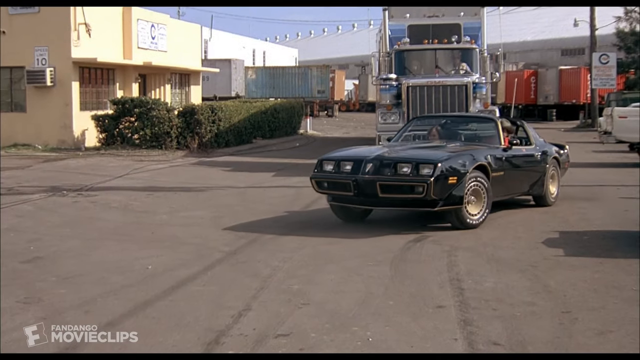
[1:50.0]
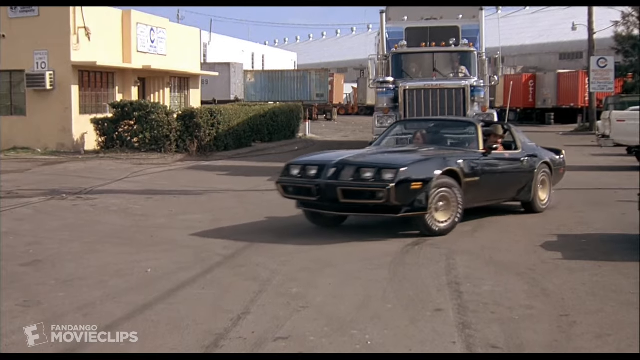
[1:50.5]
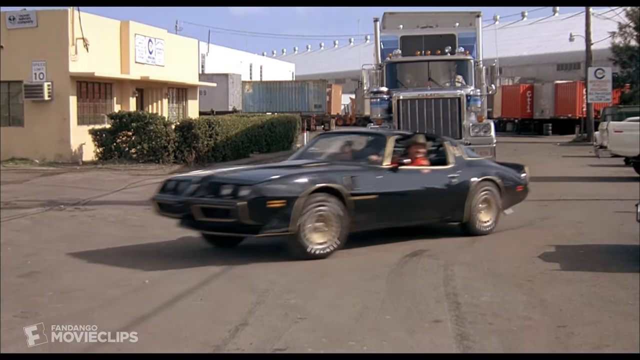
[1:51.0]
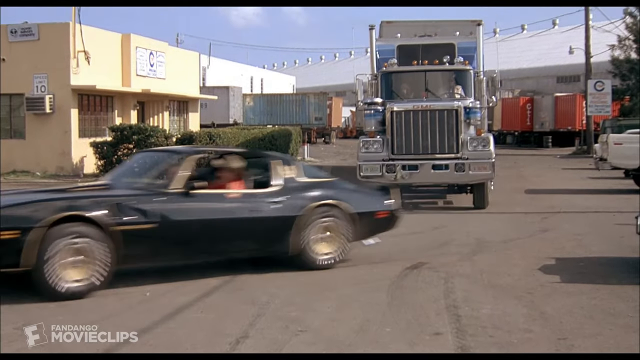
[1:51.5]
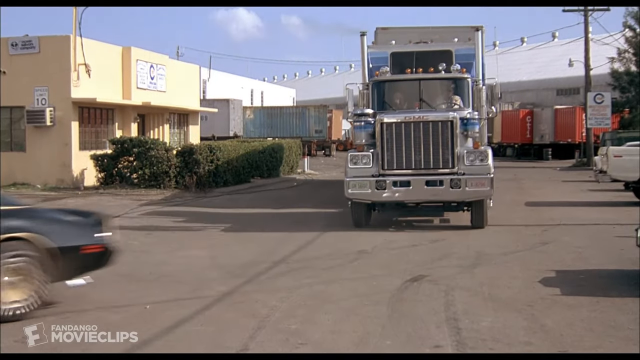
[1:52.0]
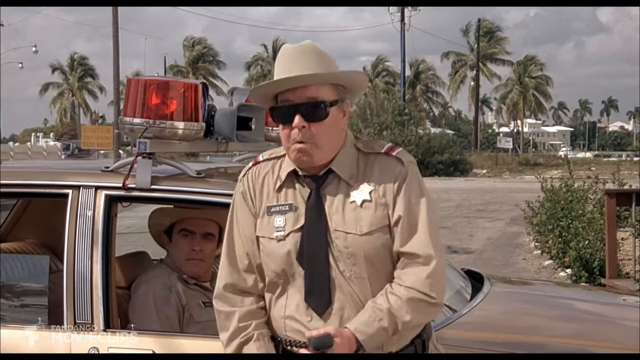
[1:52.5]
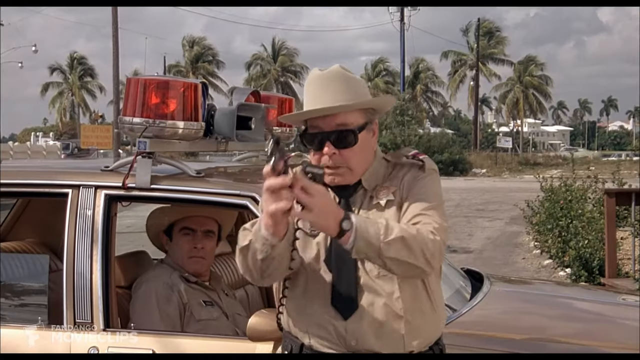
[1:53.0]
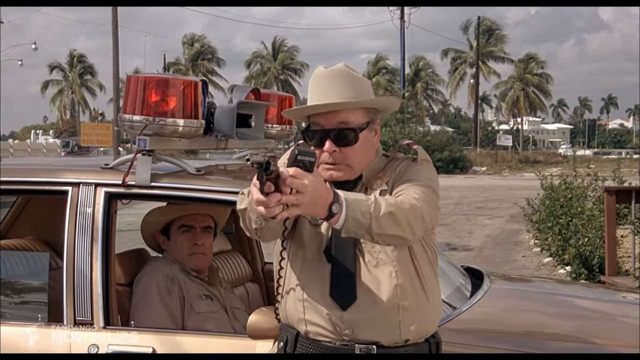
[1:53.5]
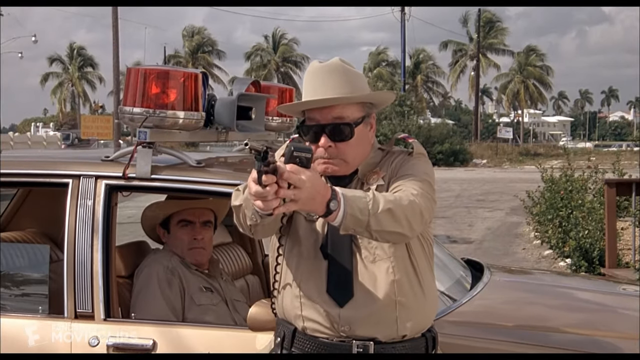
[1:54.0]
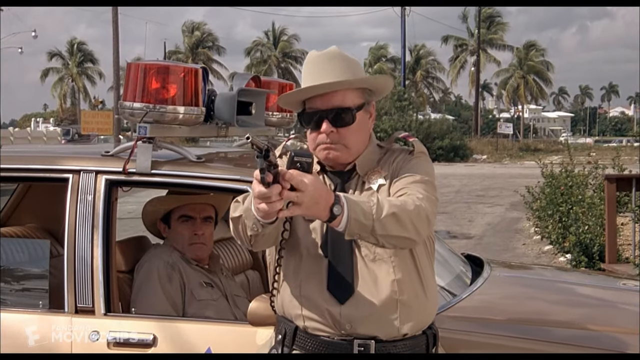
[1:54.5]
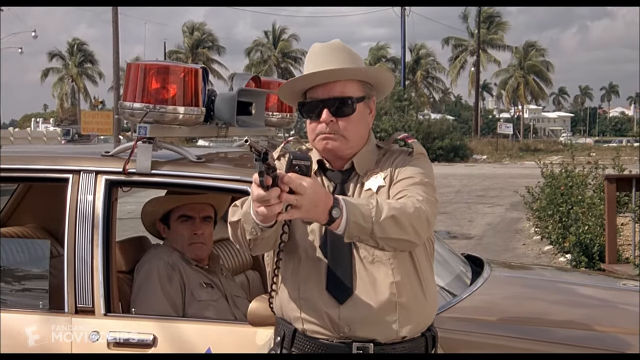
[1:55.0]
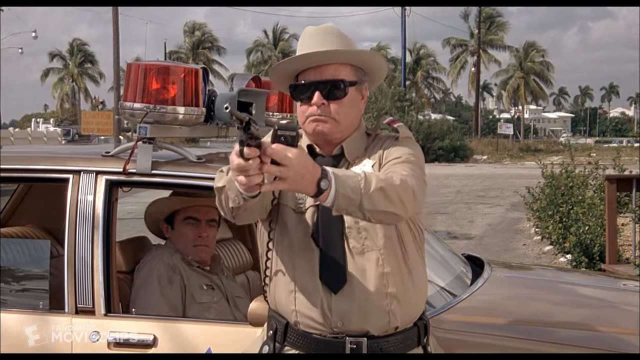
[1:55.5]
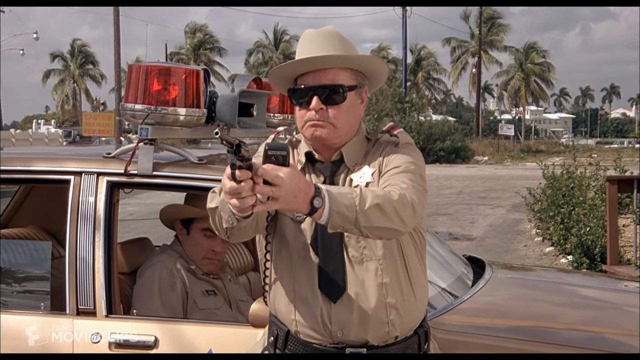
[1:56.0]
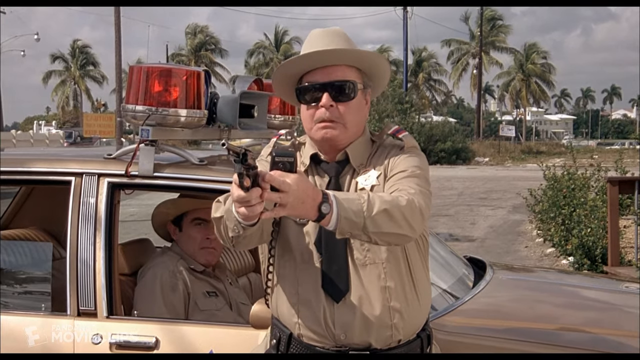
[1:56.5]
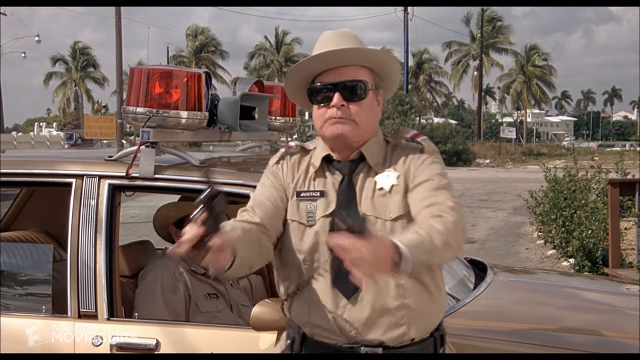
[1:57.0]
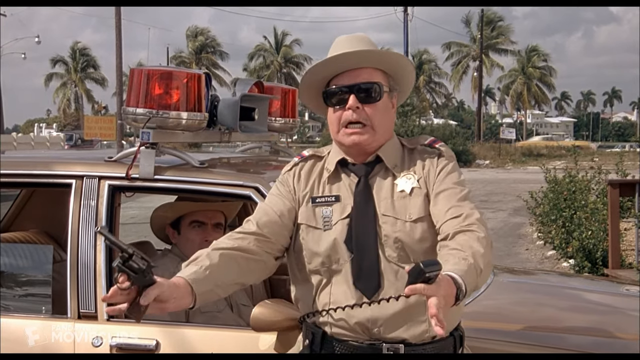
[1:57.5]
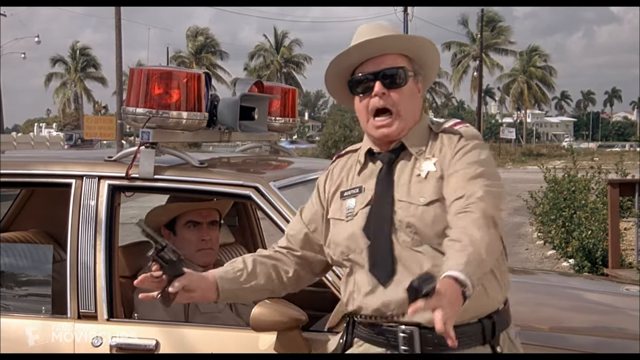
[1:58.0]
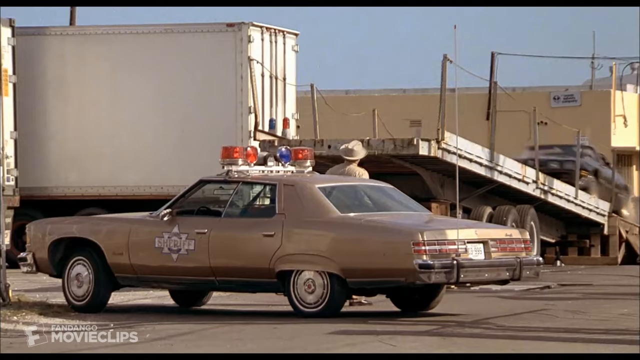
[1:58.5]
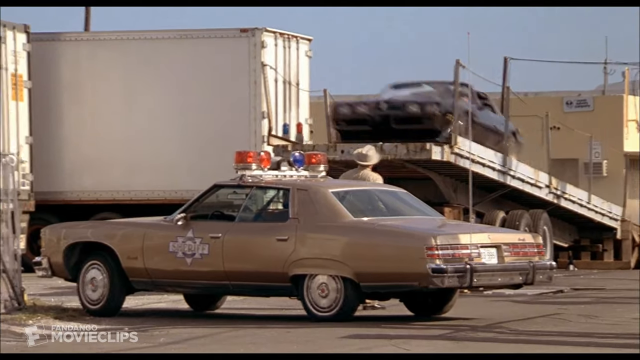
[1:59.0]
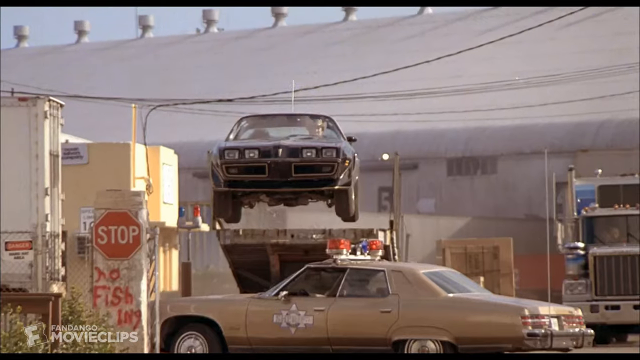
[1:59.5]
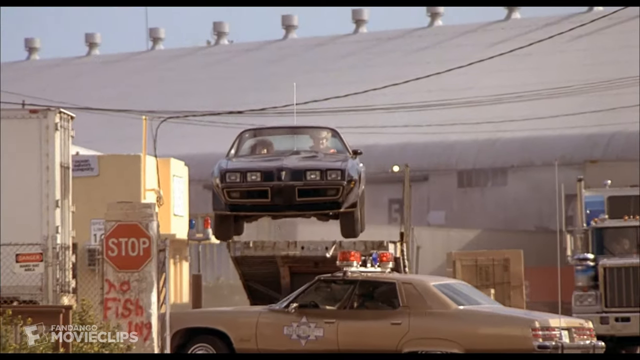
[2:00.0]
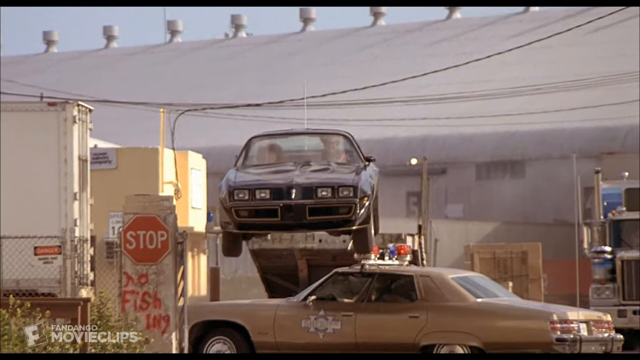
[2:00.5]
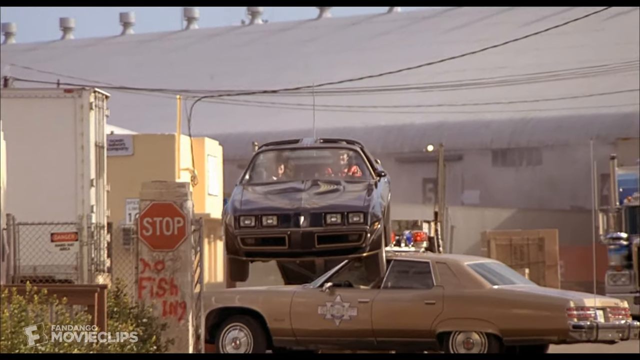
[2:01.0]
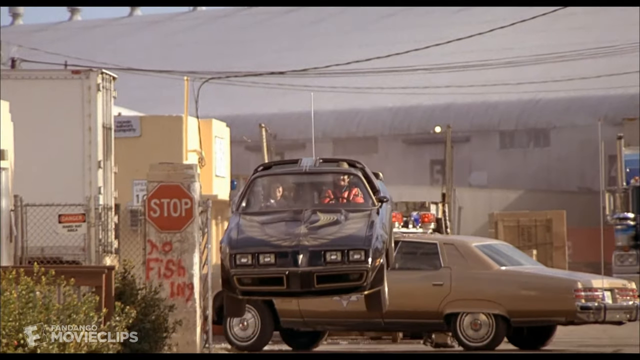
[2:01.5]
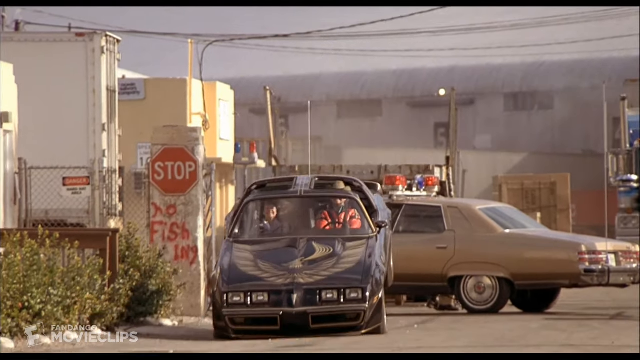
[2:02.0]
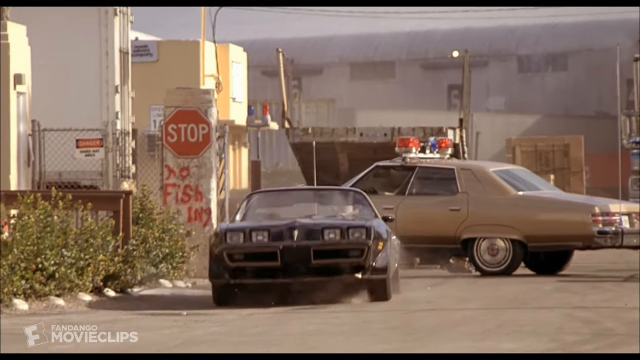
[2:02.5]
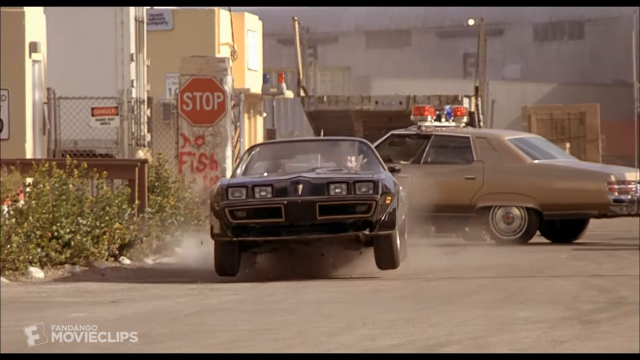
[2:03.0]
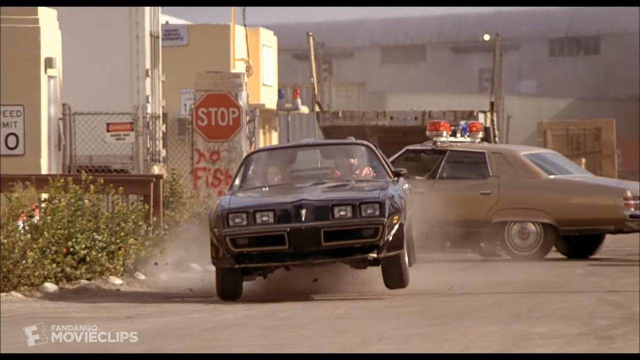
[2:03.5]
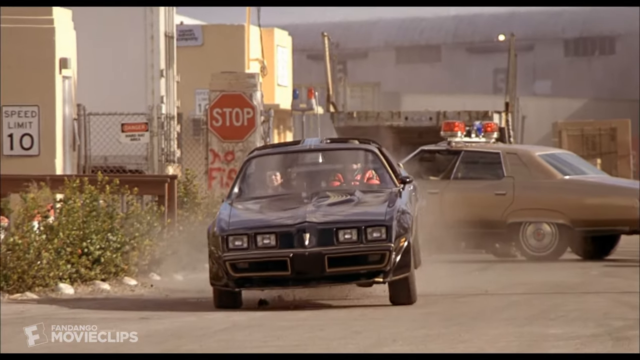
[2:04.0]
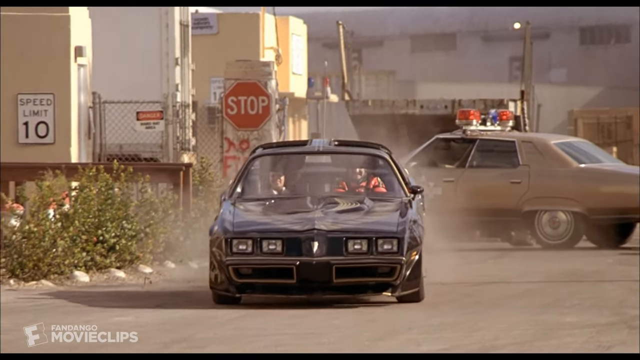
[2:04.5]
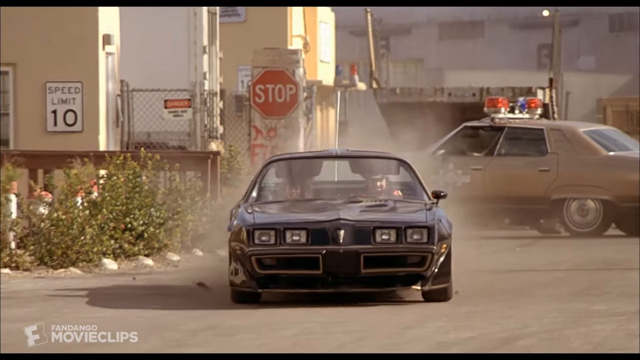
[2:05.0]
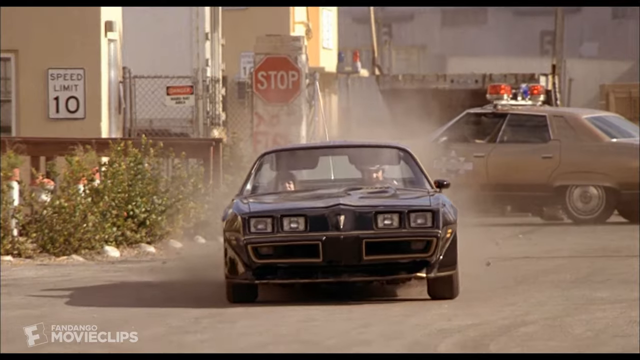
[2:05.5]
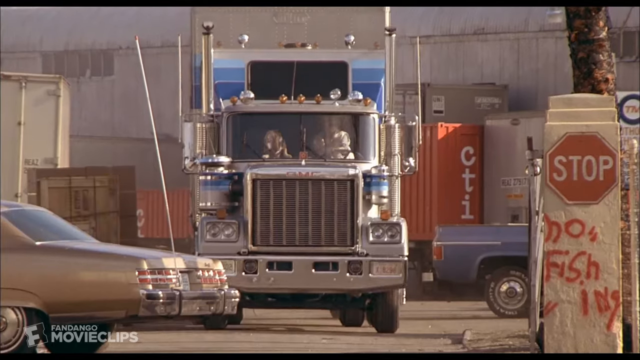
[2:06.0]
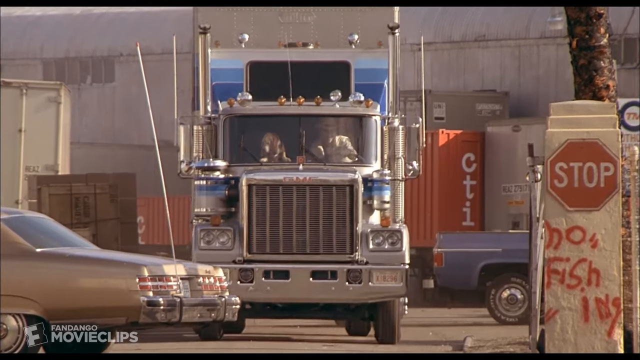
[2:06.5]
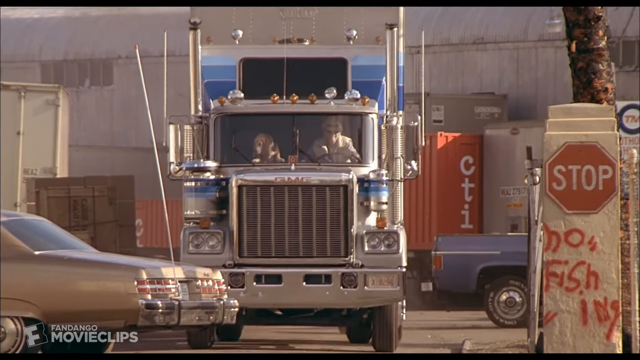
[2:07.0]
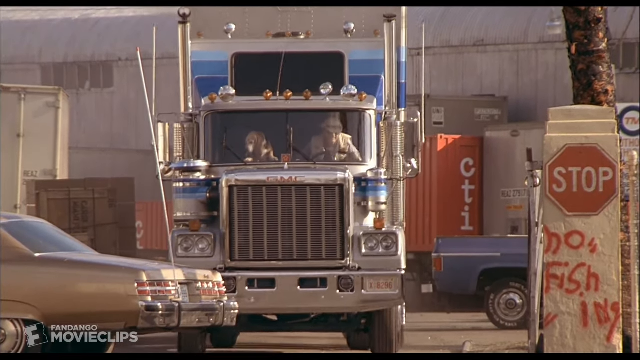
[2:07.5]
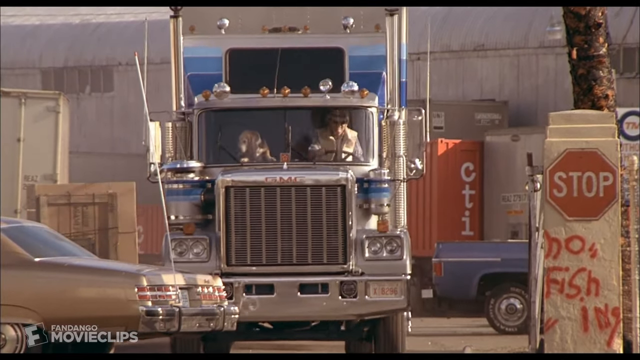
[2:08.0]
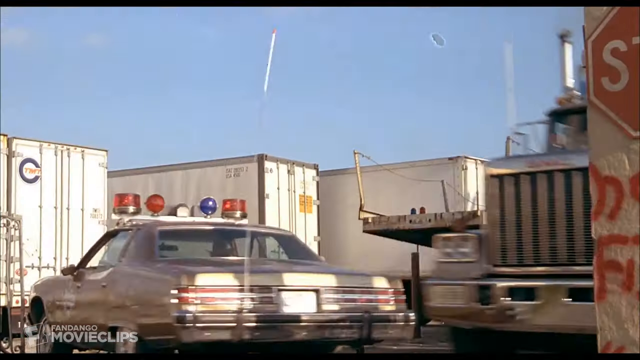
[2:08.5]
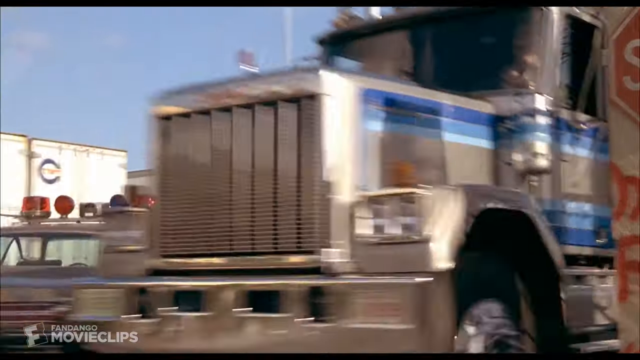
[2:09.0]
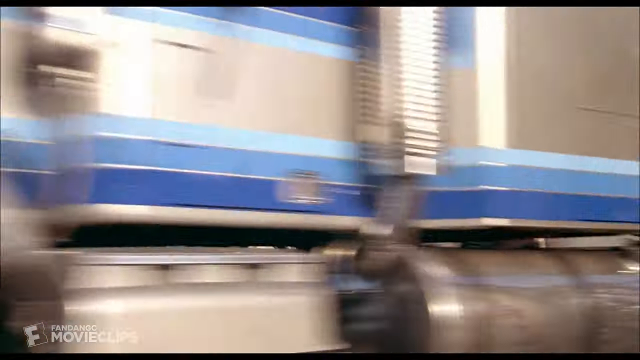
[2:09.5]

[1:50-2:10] He accelerates the car and the truck starts moving. The policeman aims his gun at them, but they have already left. The policeman shakes his head, sees the truck approaching, and looks terrified, opening his mouth in despair. The car runs up a ramp that is right there and jumps over the police car, and the truck that was behind comes running and hits the back of the police car.